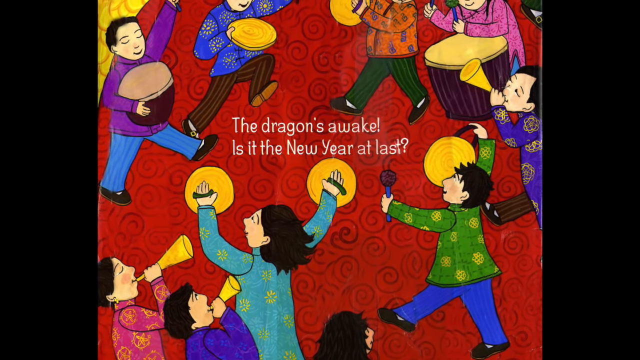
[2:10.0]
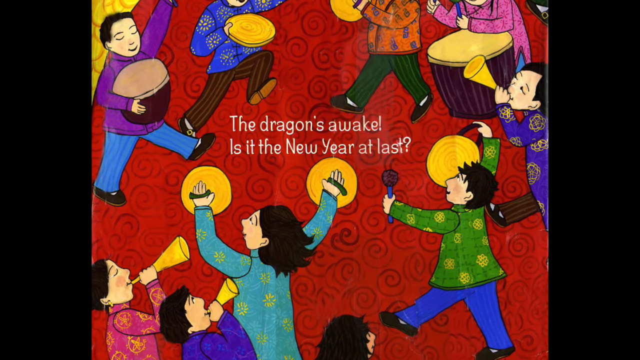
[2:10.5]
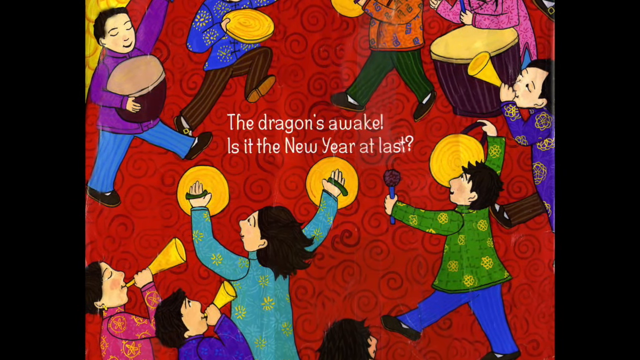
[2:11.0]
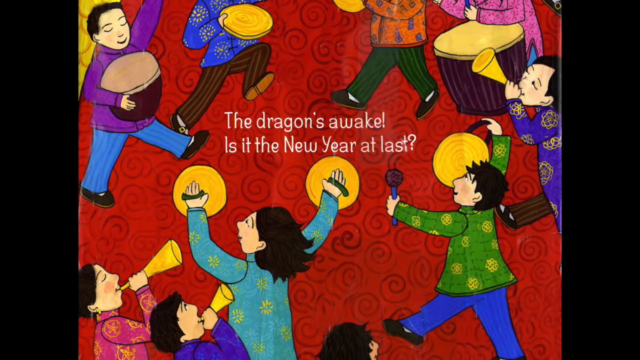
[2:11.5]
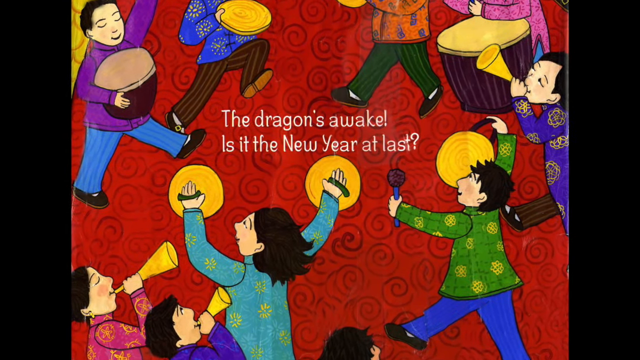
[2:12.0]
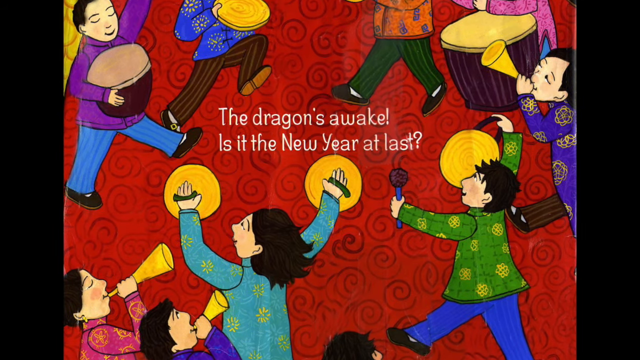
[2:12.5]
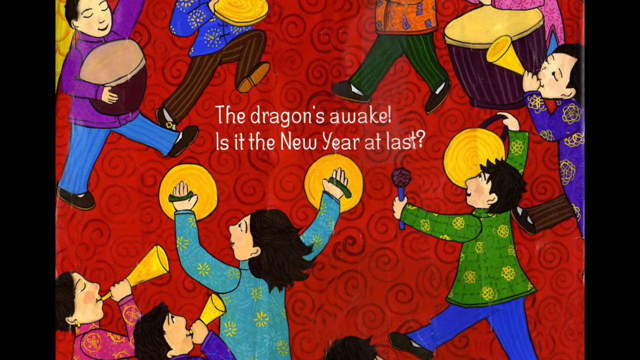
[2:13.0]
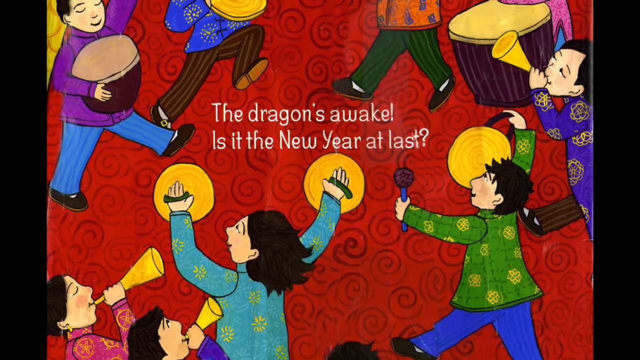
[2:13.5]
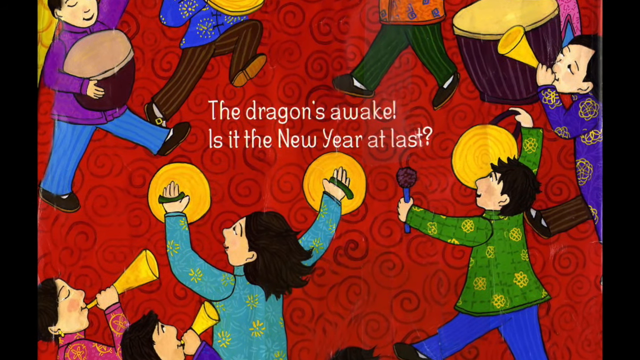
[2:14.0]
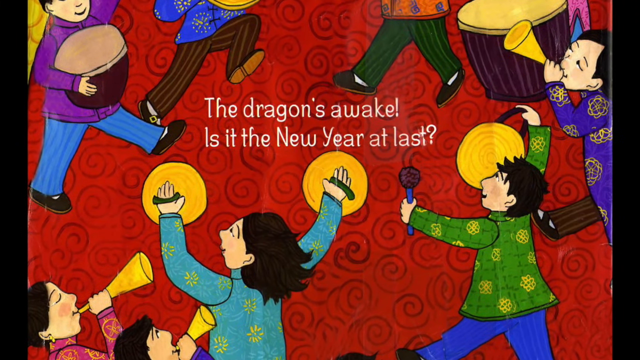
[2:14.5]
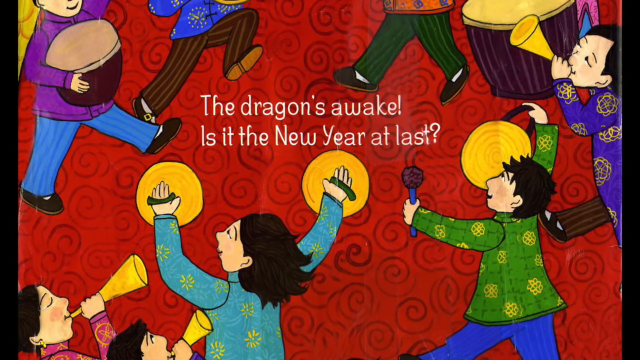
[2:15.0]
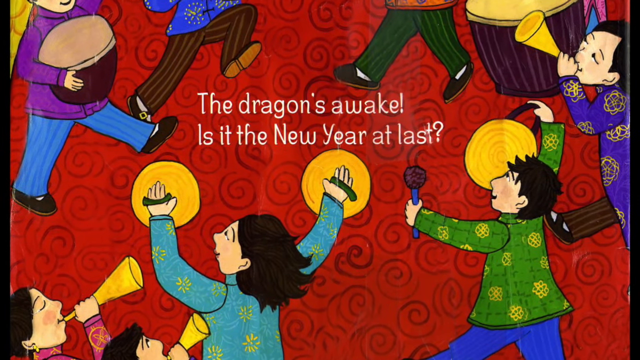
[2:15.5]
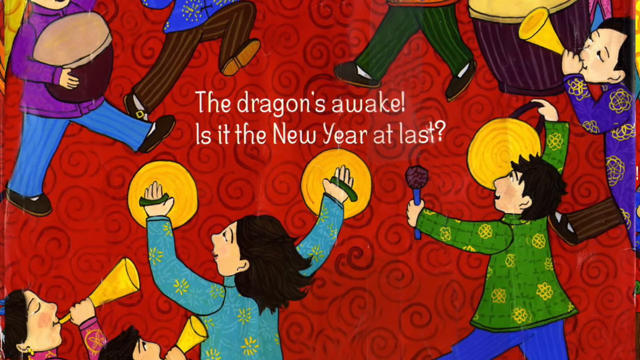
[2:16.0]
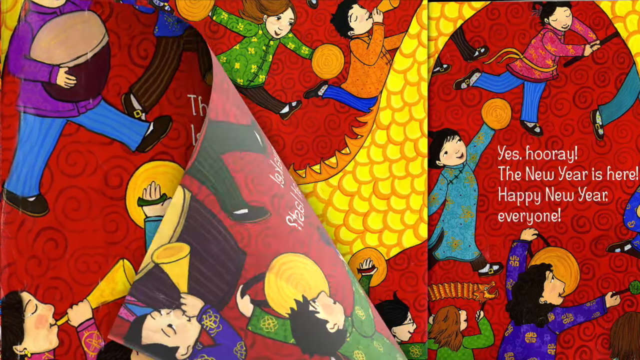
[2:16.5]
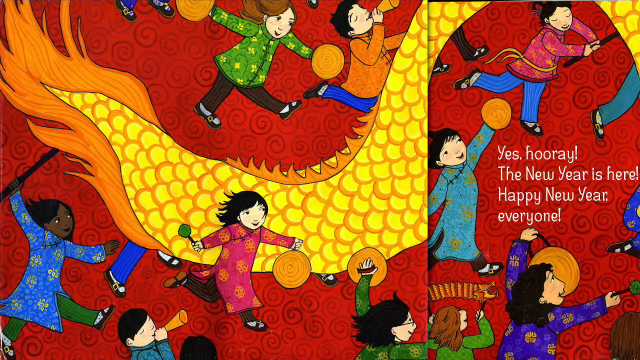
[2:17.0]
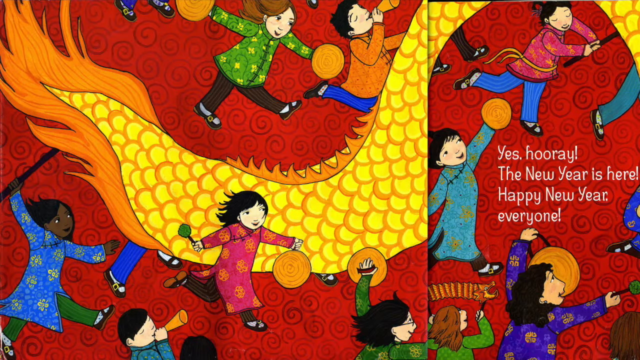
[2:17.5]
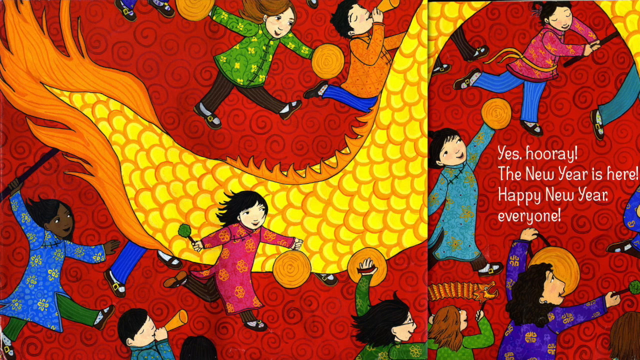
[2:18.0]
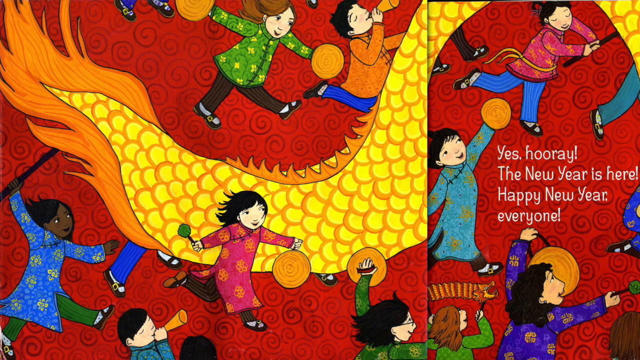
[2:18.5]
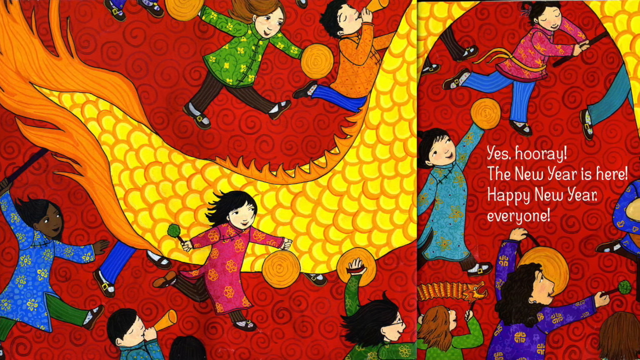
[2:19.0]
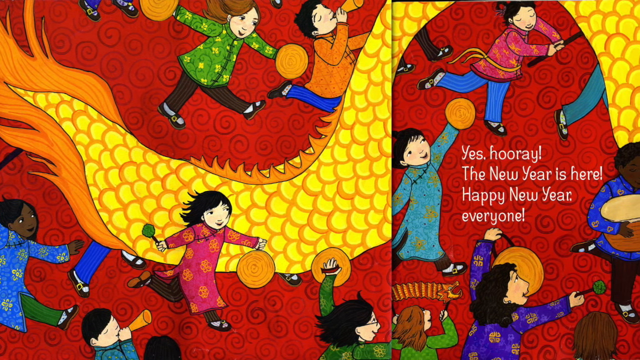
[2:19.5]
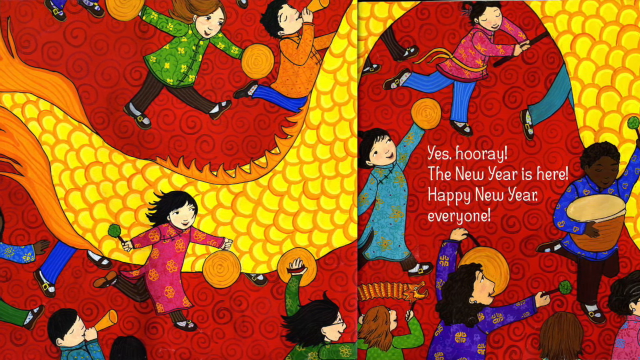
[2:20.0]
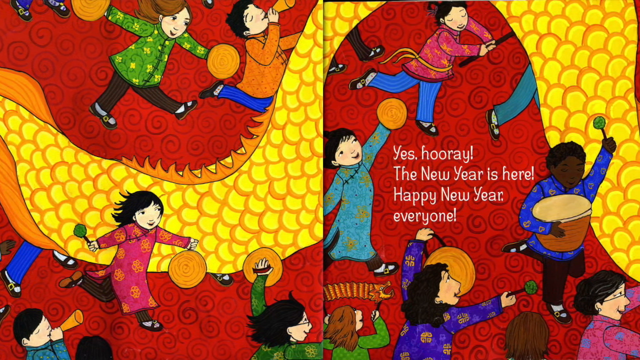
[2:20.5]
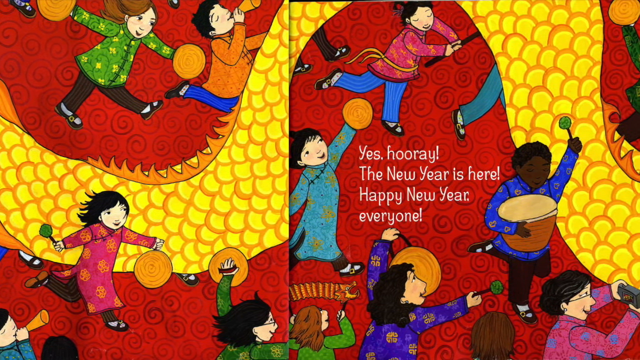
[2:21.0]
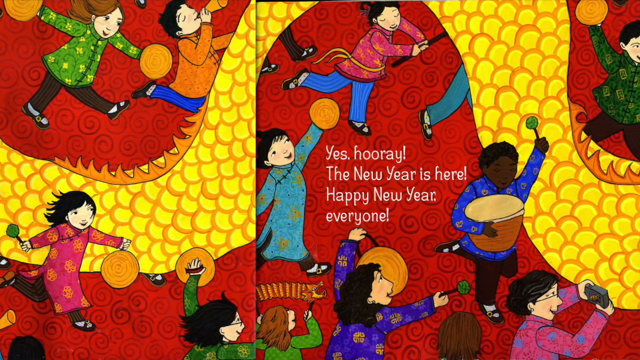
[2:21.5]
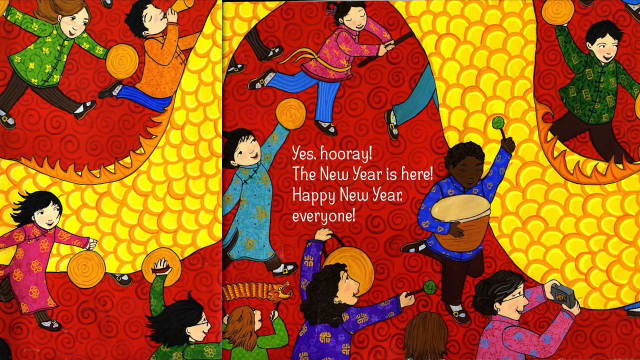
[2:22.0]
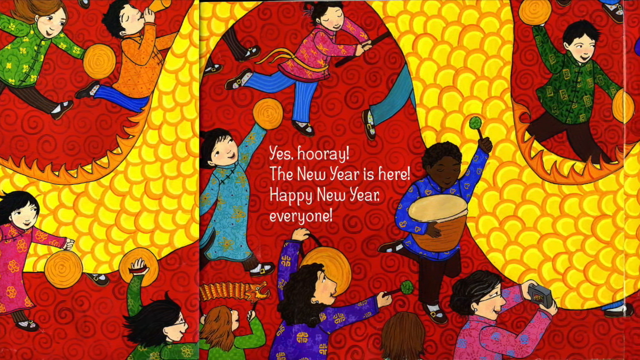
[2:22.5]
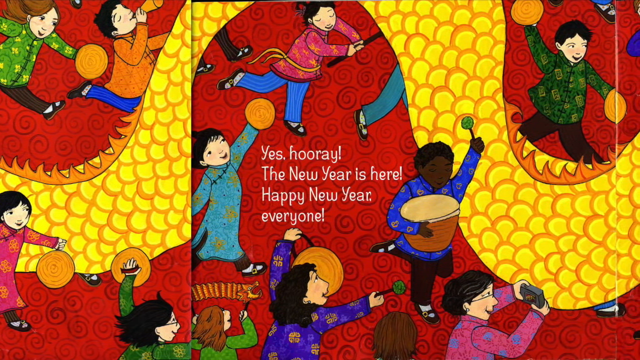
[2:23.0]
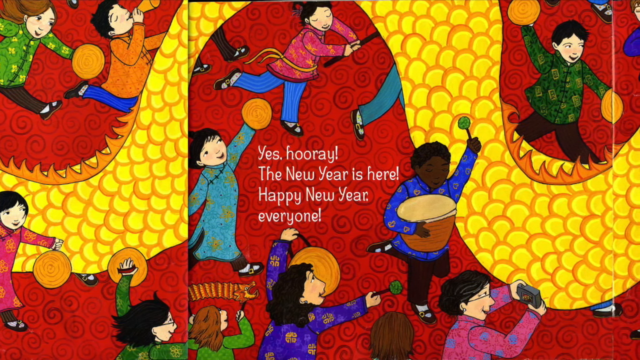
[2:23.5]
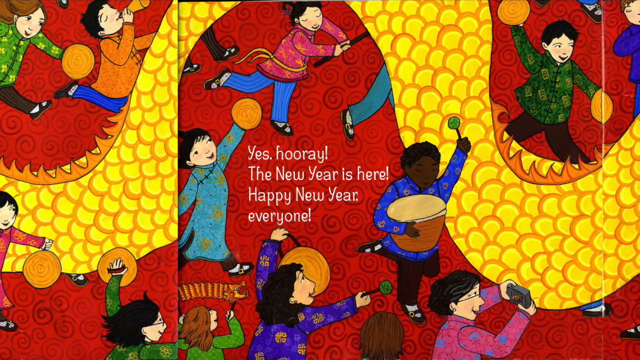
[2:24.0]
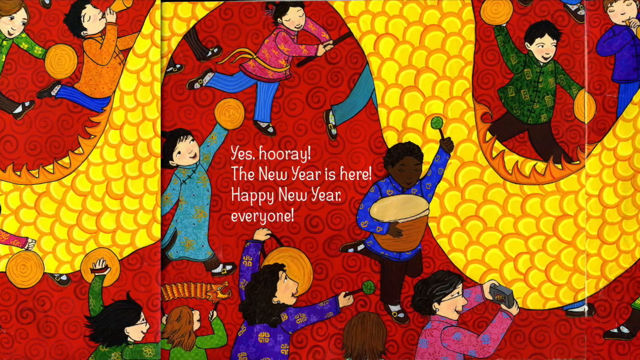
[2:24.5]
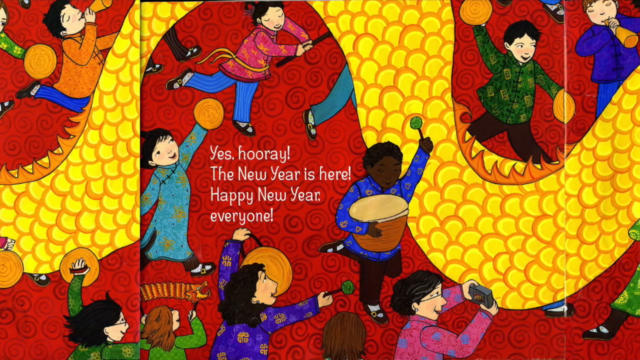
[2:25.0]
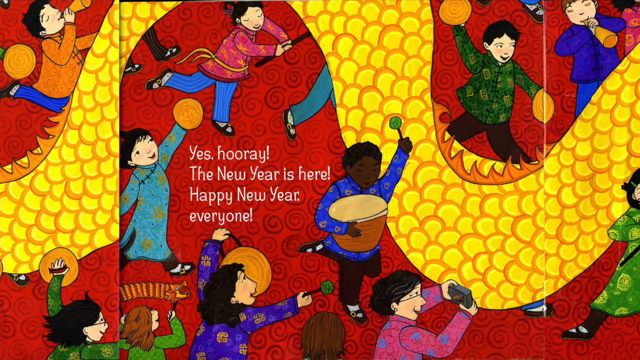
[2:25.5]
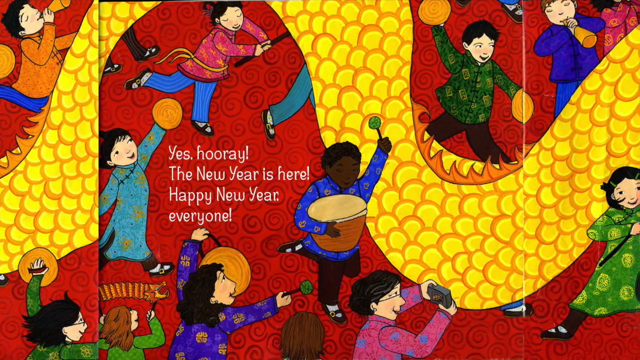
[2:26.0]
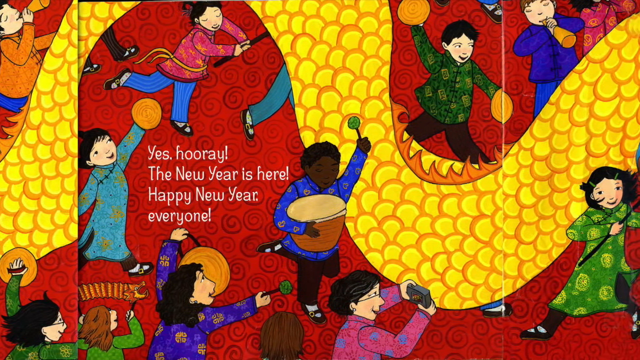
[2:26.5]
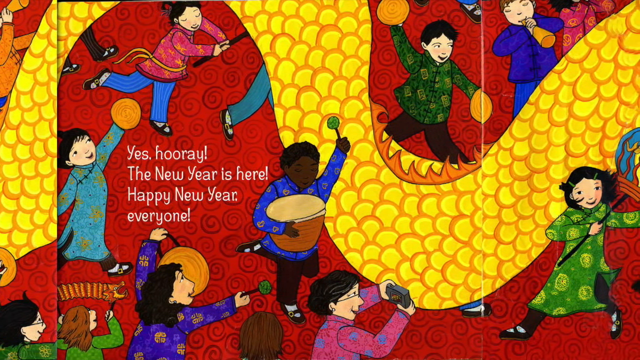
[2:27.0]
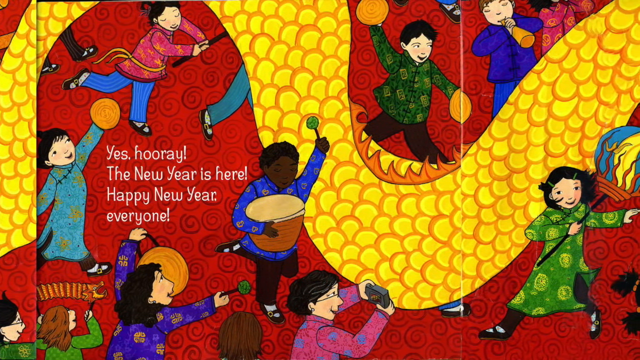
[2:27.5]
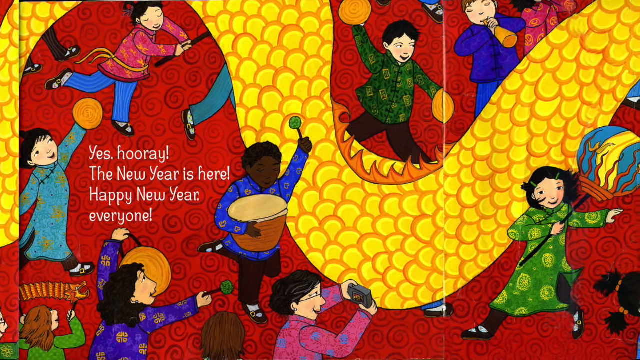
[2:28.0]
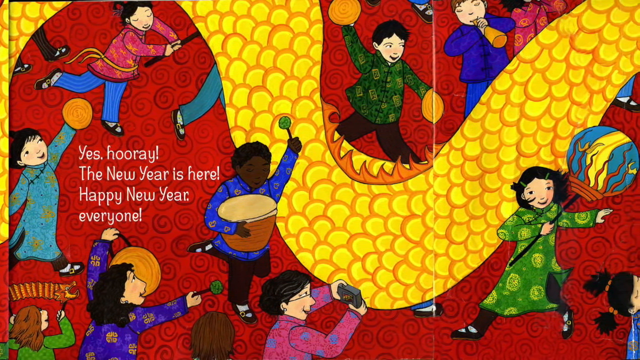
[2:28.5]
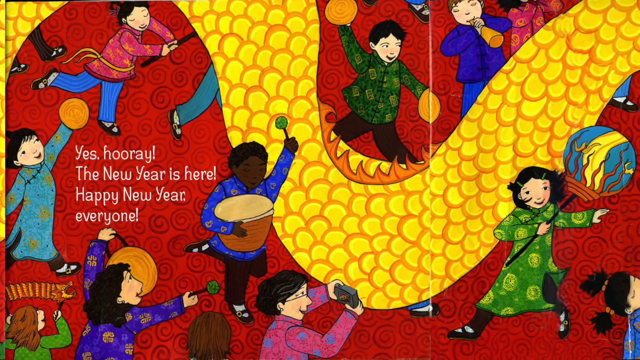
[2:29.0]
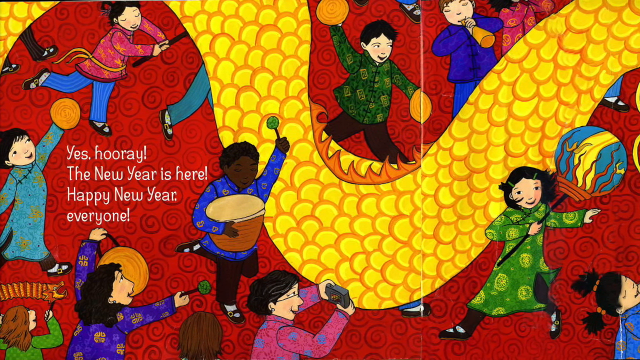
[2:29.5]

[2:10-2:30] A group of people stand around celebrating: some with cymbals, some with horns, one with a gong, and two with drums of varying sizes. In the middle of them the text reads "the dragon's awake. Is it the New Year's at last?" The view zooms in on the text, then the page changes. The dragon's tail is on the left page, with many people following, celebrating and helping the dragon move along. The view slowly pans right to more people celebrating, helping with the dragon and even taking pictures. In an opening the text reads "yes, hooray, the new year is here. Happy new year, everyone." As the panning continues right, more and more of the dragon's body is revealed, along with more people celebrating and helping with the dragon, some holding lanterns.